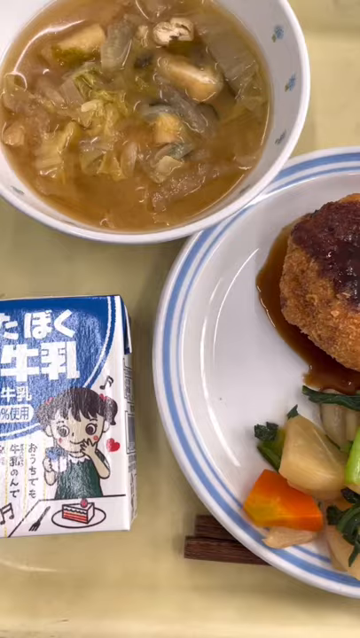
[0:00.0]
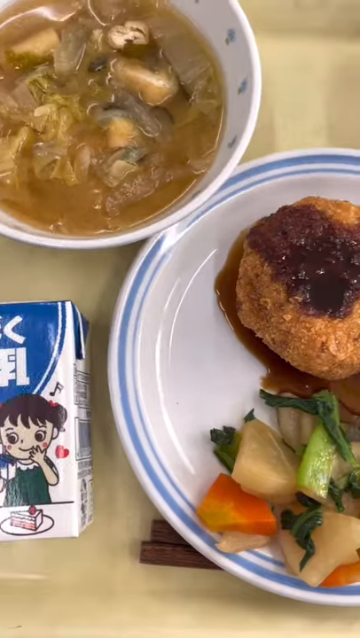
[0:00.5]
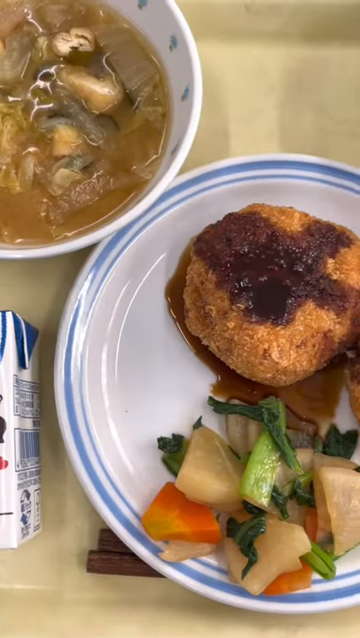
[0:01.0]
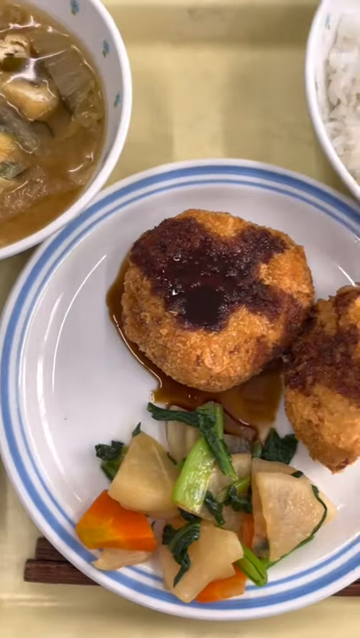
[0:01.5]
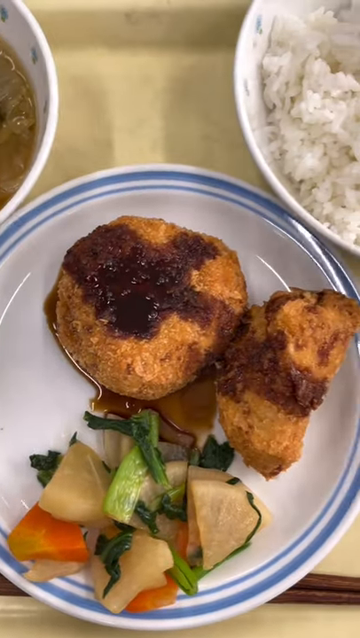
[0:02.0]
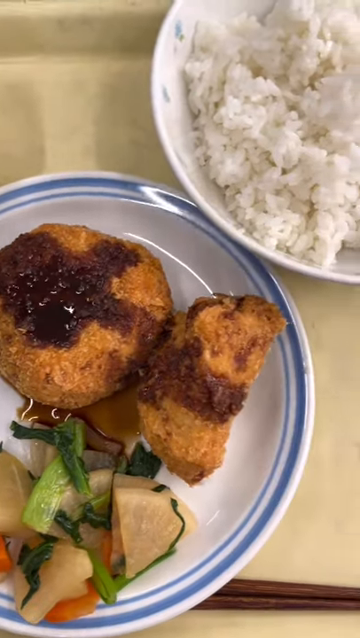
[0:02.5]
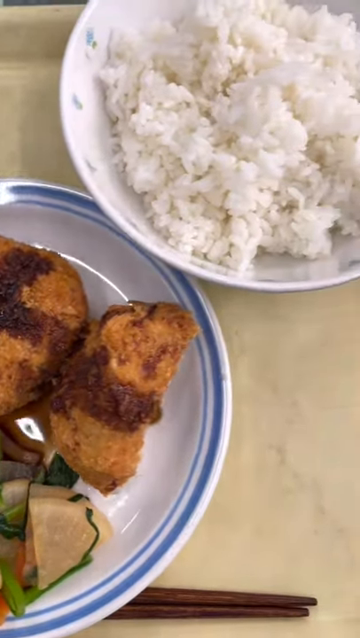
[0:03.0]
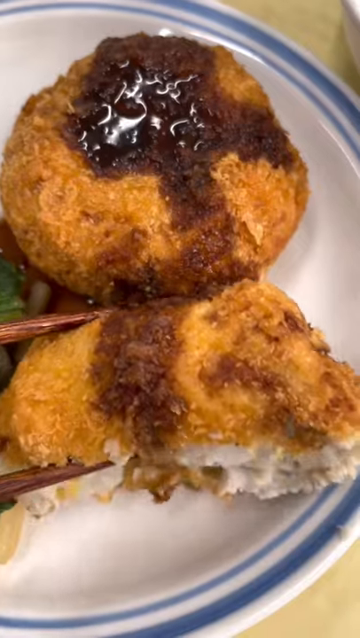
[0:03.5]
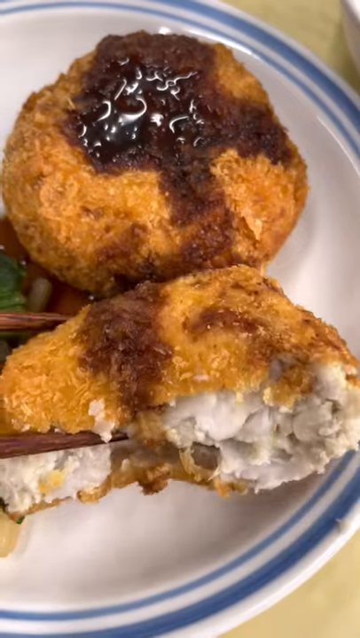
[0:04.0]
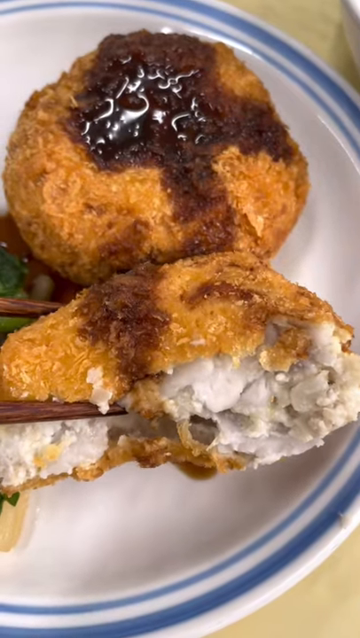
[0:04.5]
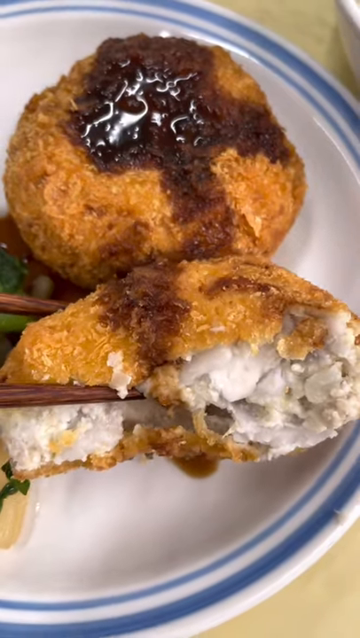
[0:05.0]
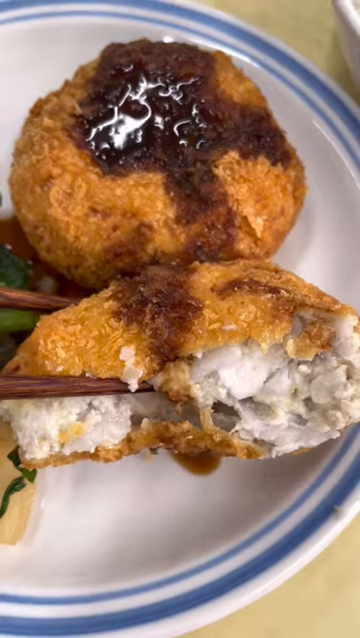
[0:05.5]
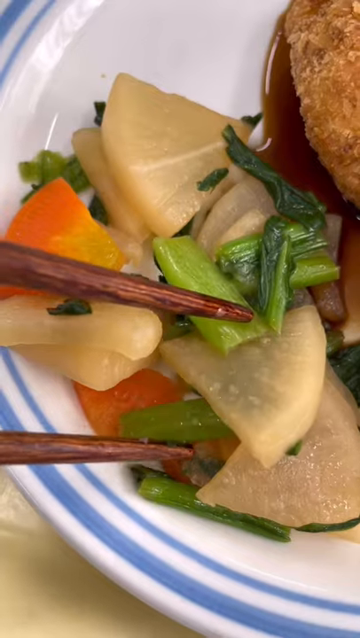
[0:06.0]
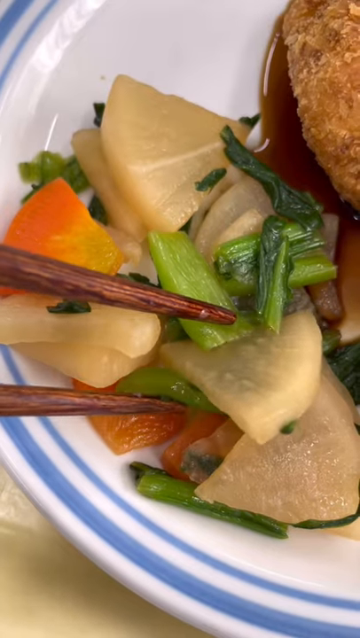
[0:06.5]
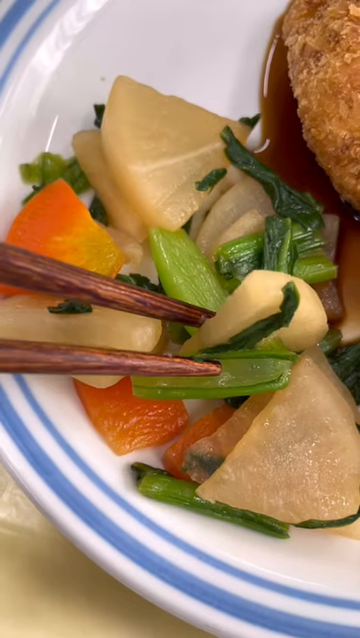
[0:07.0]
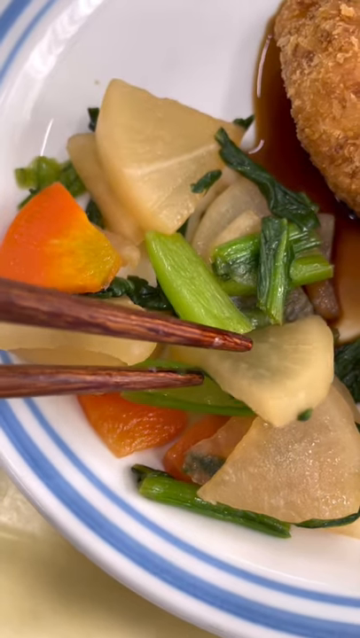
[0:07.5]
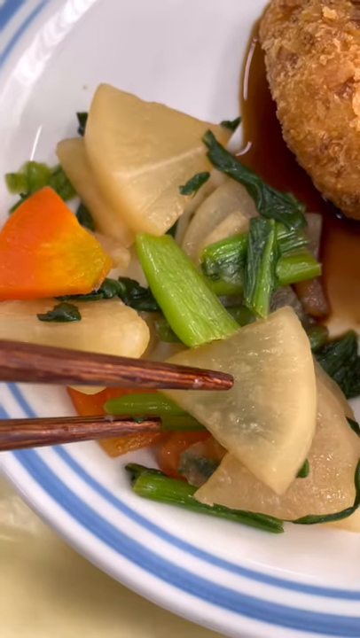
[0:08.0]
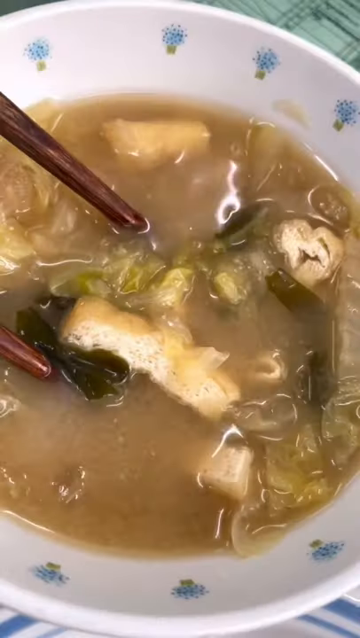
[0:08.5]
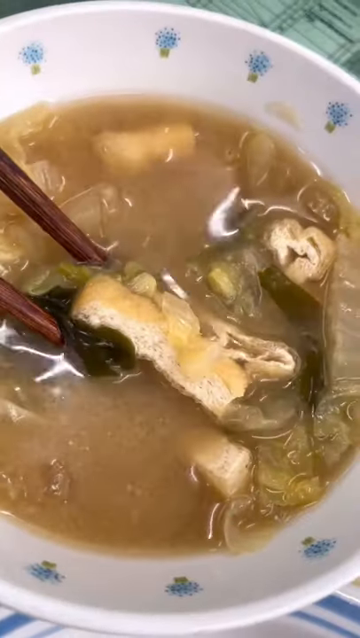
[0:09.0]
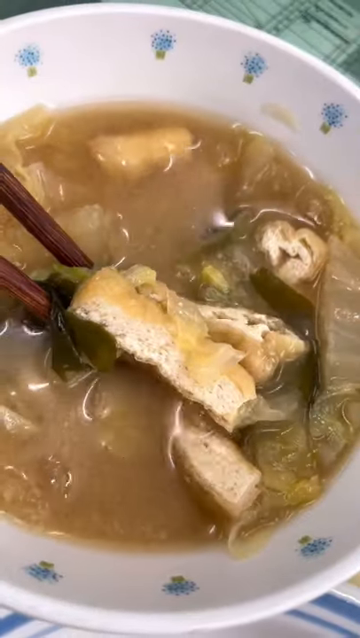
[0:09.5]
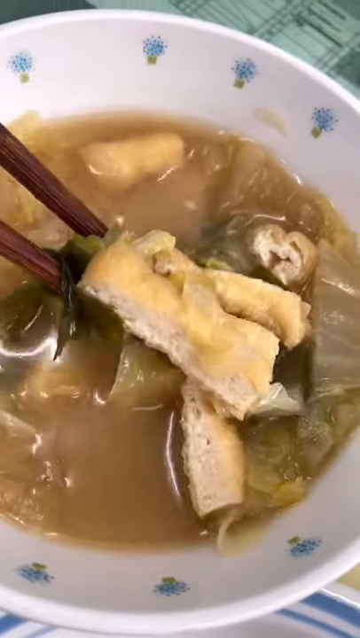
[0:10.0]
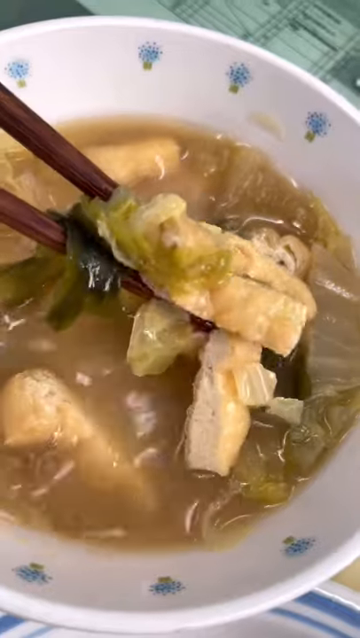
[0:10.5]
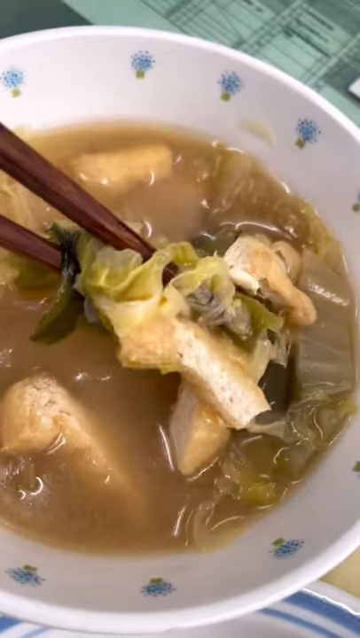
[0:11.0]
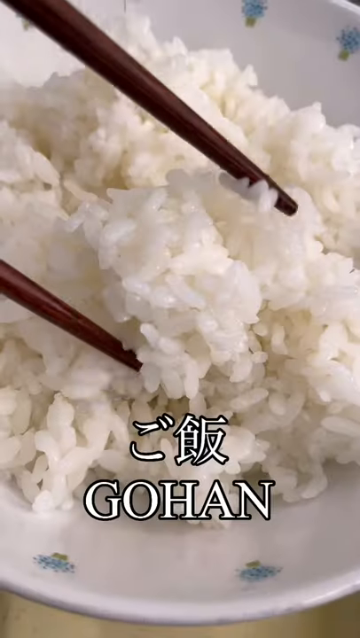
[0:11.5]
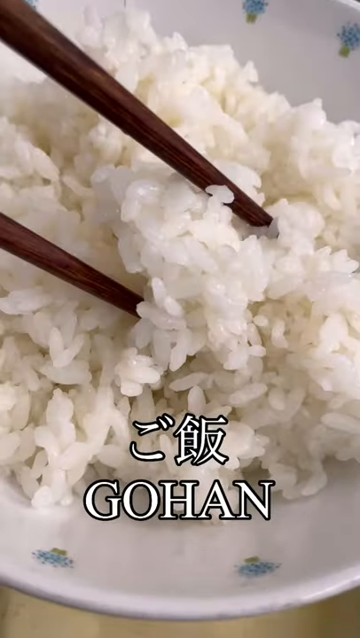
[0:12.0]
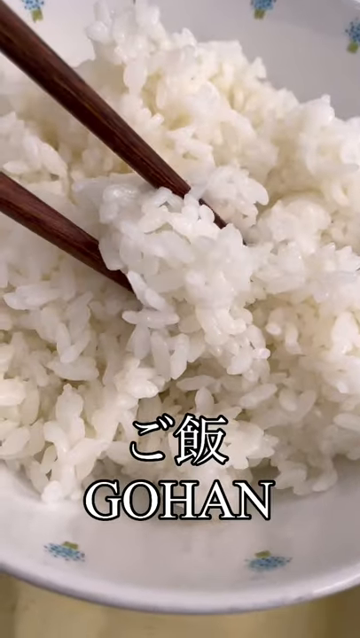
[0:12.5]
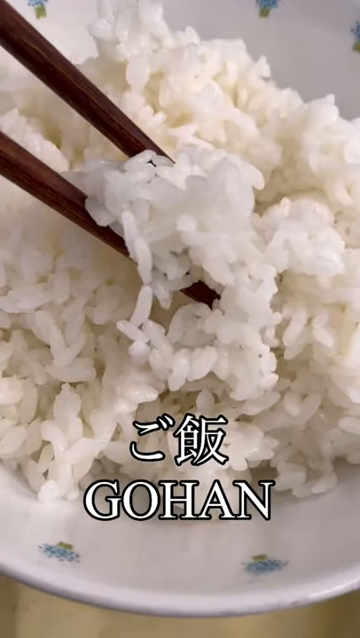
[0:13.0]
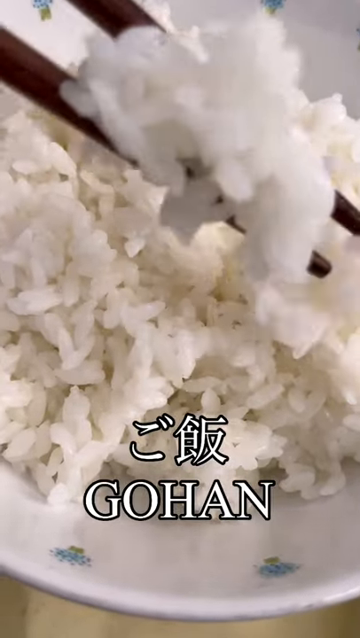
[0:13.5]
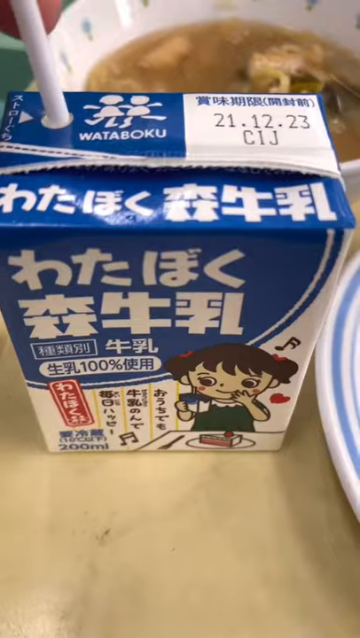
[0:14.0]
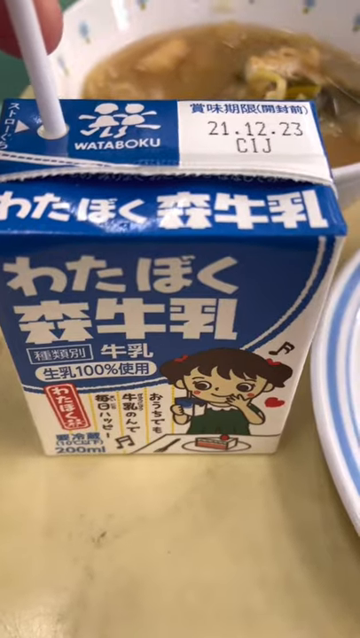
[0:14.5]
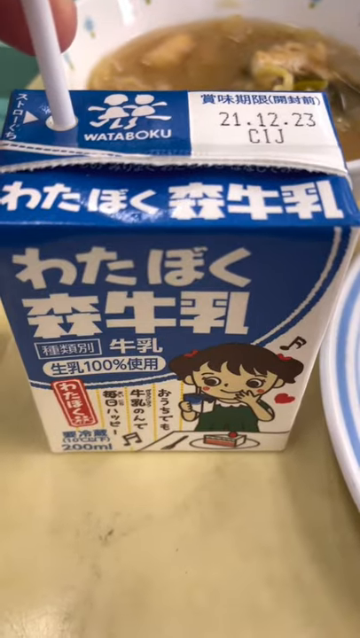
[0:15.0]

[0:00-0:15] The camera scrolls over plates and bowls of food. The plates are white with a blue rim, and the bowls look white. On a plate are food items that look like vegetables and a brown item with a darker brown sauce on it, and then a bowl of rice appears. A close-up of the brown item shows something that kind of looks like it may be chicken, looking bright white. Someone picks up the vegetables with brown chopsticks. Next comes a bowl of food that looks like soup; the person has the chopsticks in the soup and is showing it off. Then the bowl of rice appears with the chopsticks now in it. The rice is white and kind of looks like the sticky variety. White text over the rice bowl reads "GOHAN", and the person picks up a scoop of rice with the chopsticks. The last image shows what looks like a juice box or a milk box, with a person sticking a straw into it.